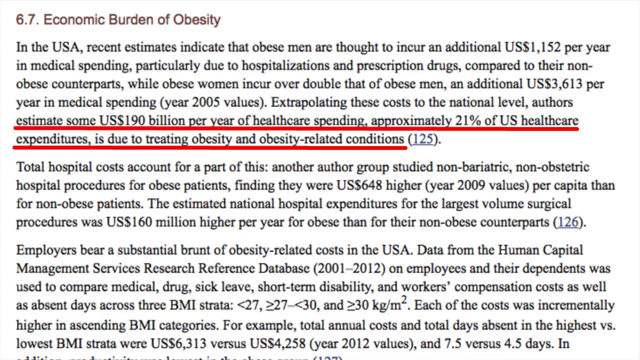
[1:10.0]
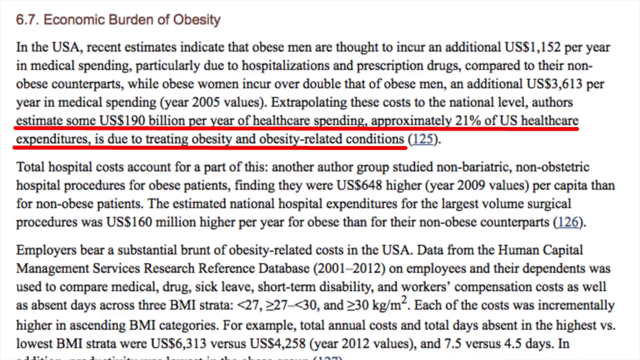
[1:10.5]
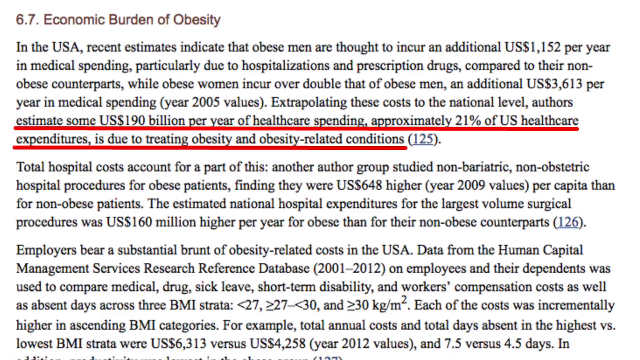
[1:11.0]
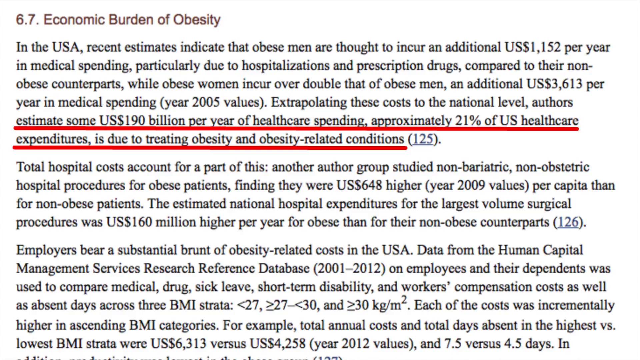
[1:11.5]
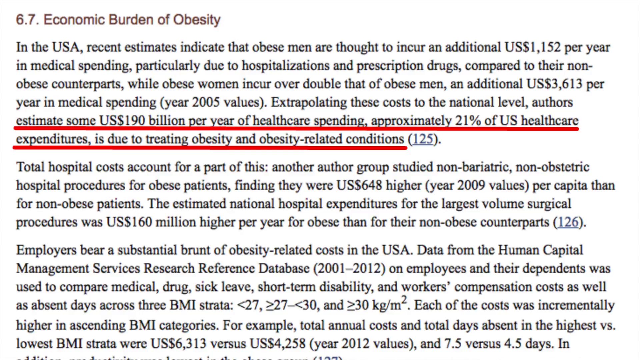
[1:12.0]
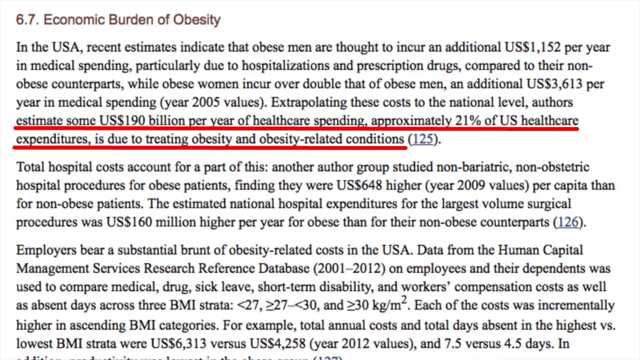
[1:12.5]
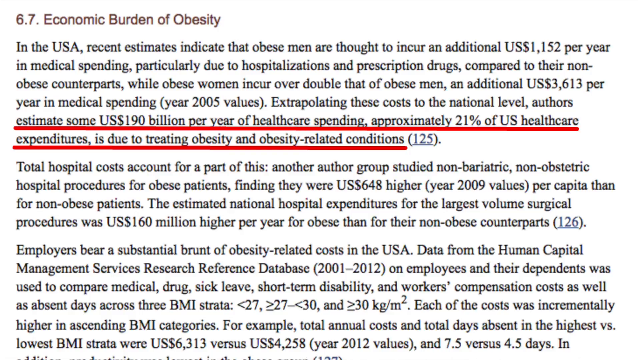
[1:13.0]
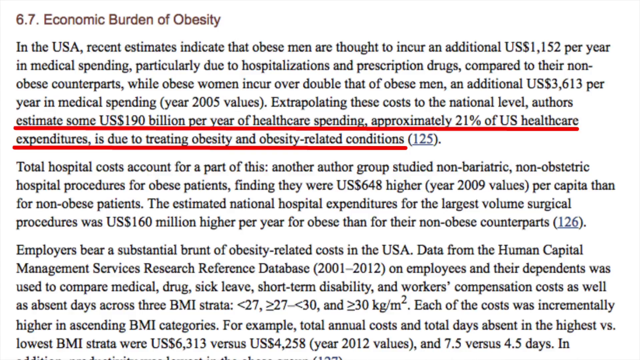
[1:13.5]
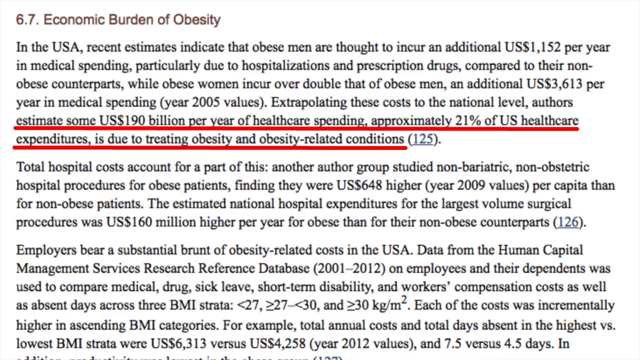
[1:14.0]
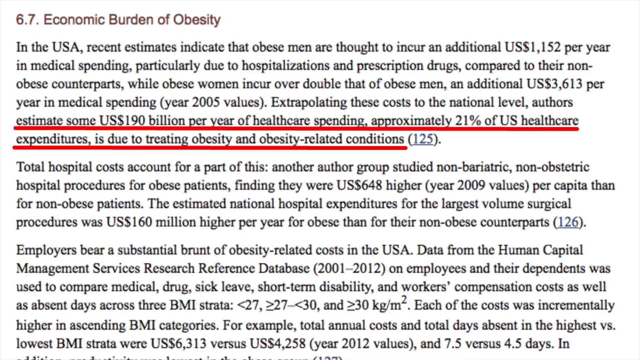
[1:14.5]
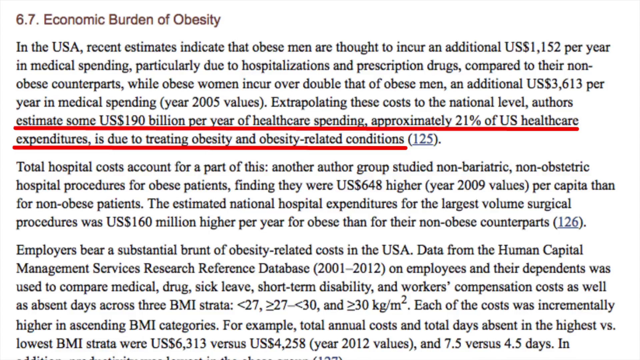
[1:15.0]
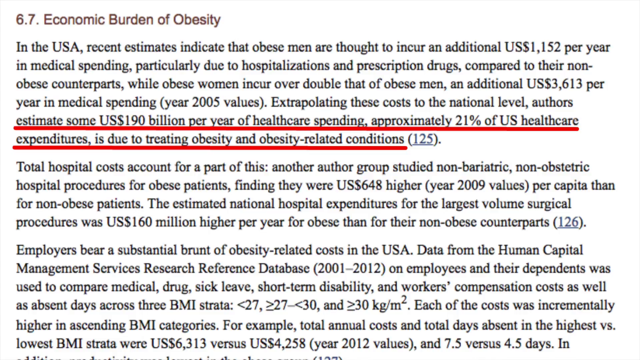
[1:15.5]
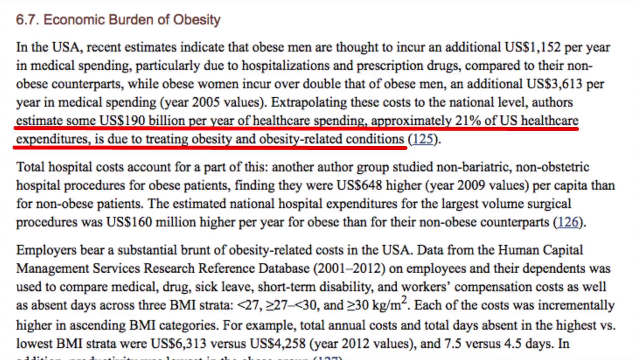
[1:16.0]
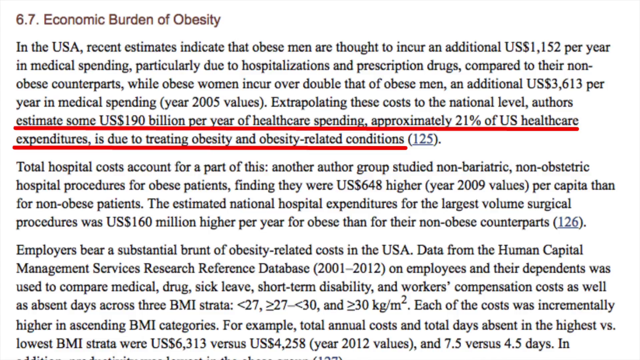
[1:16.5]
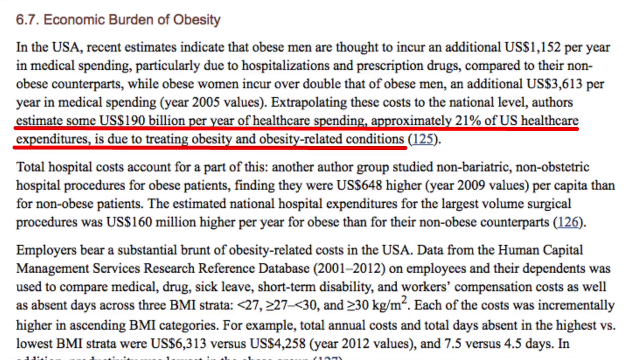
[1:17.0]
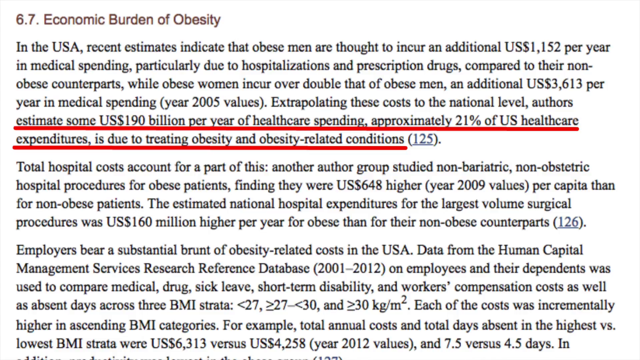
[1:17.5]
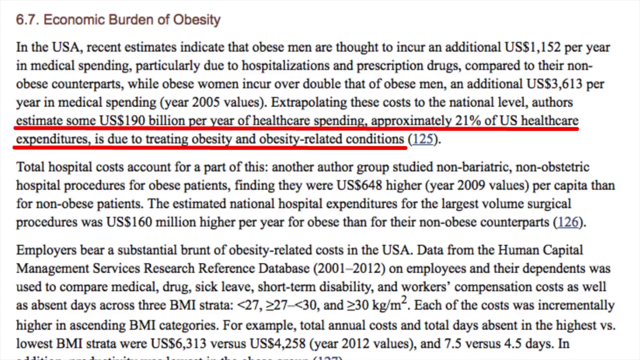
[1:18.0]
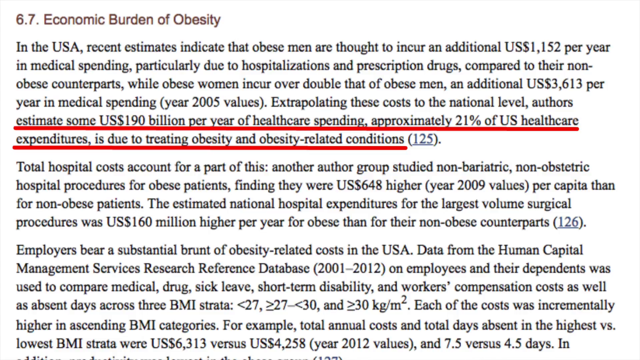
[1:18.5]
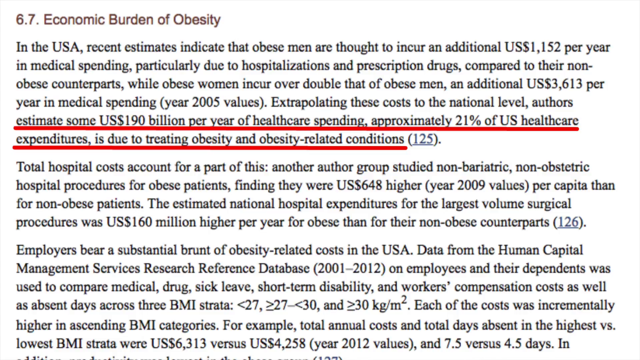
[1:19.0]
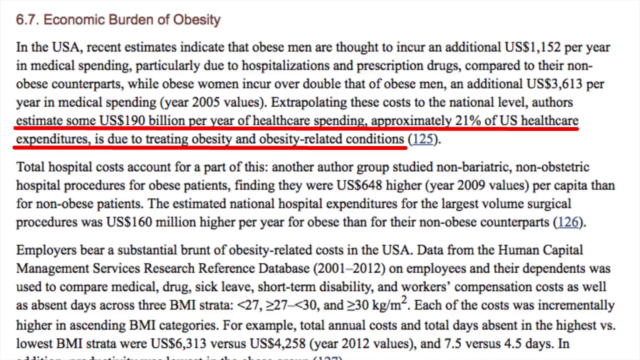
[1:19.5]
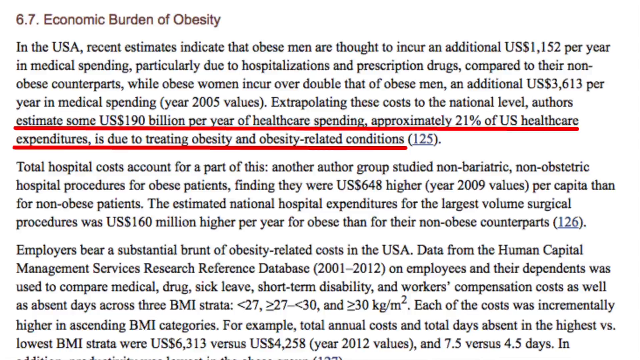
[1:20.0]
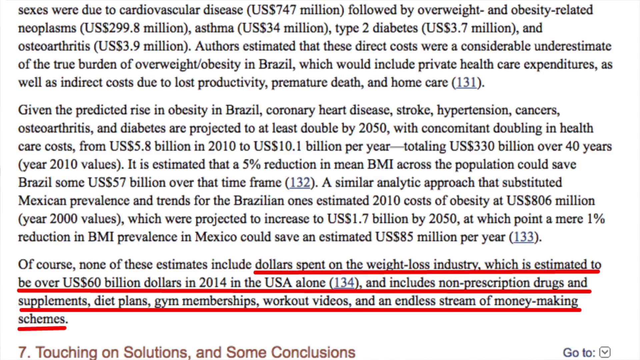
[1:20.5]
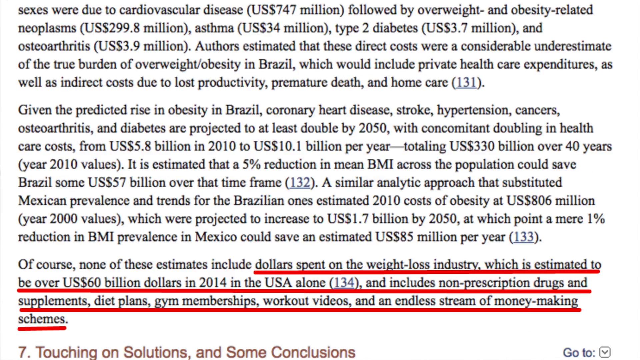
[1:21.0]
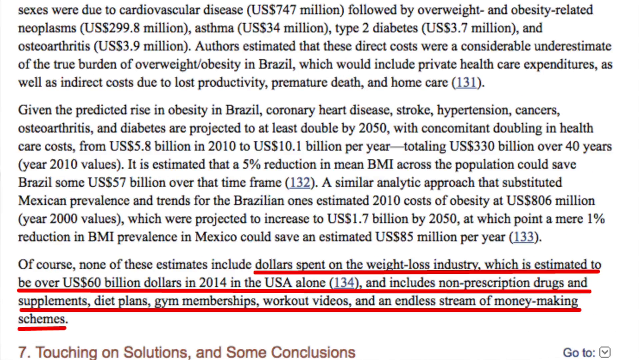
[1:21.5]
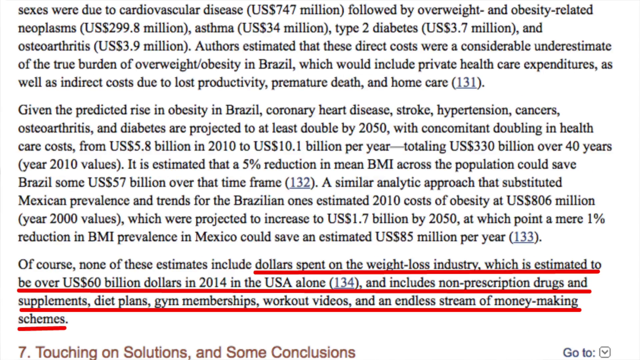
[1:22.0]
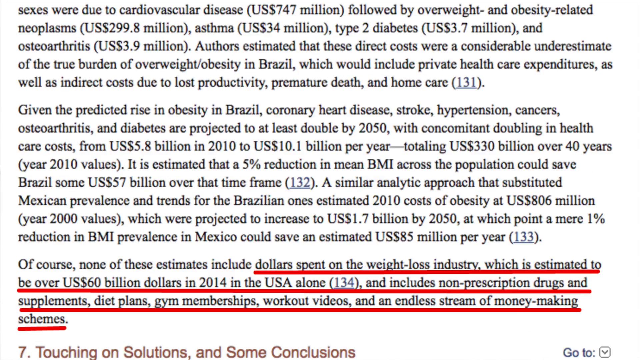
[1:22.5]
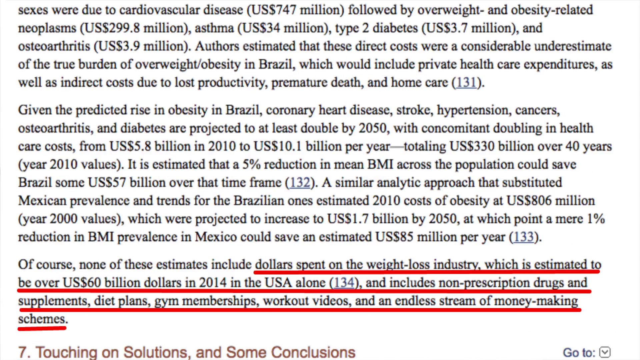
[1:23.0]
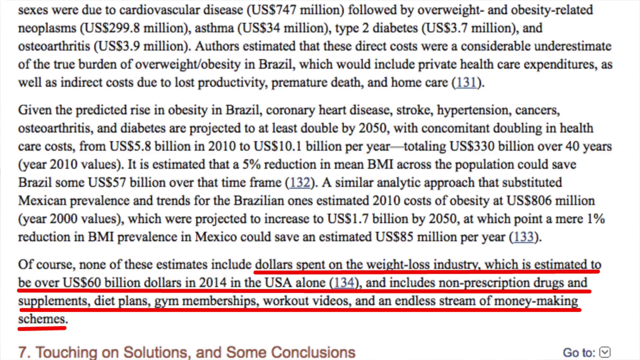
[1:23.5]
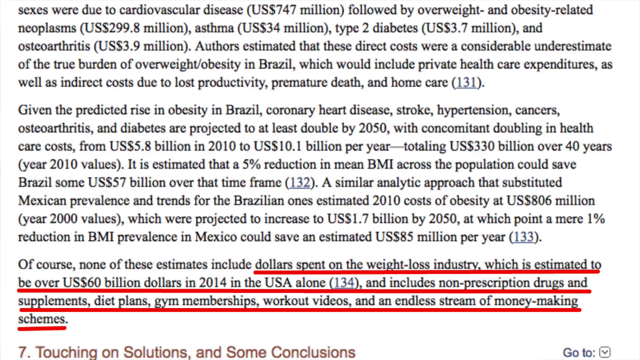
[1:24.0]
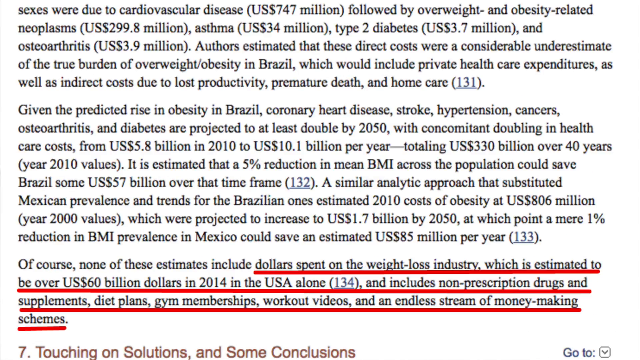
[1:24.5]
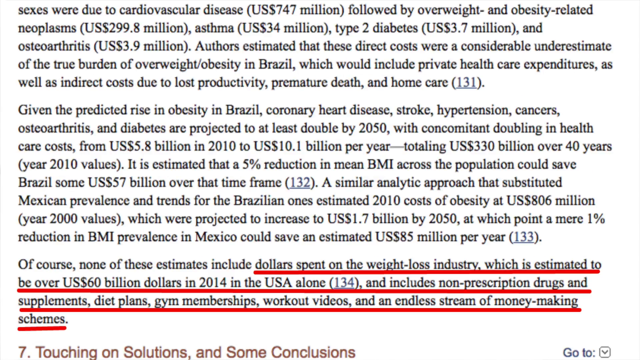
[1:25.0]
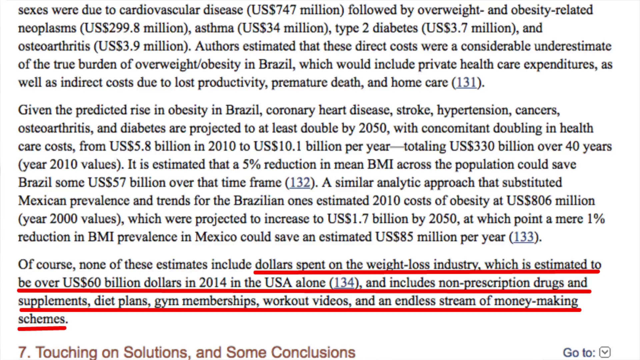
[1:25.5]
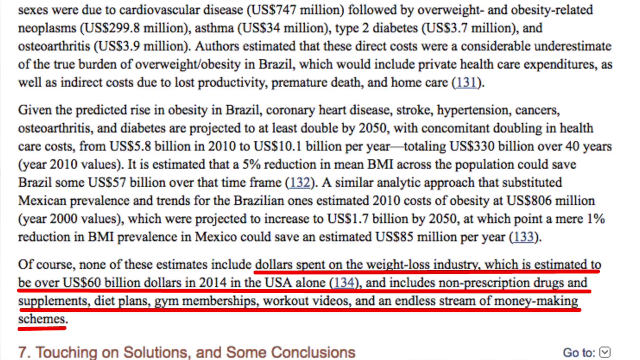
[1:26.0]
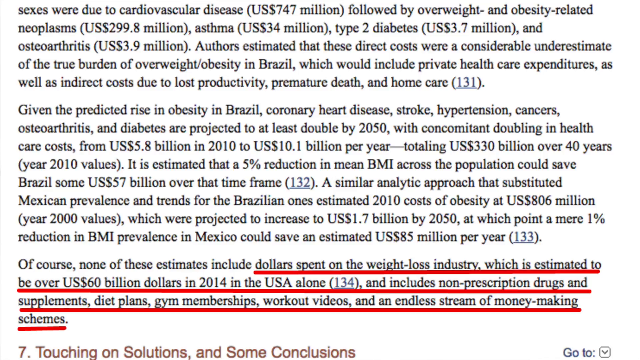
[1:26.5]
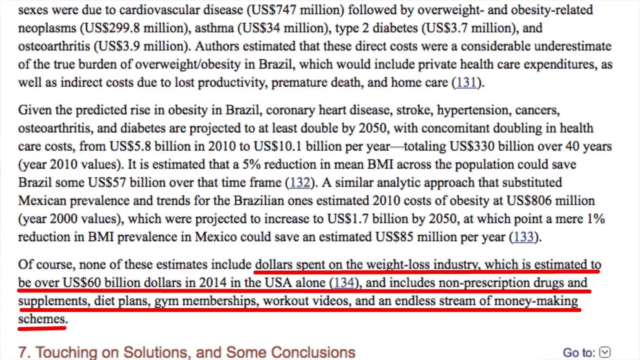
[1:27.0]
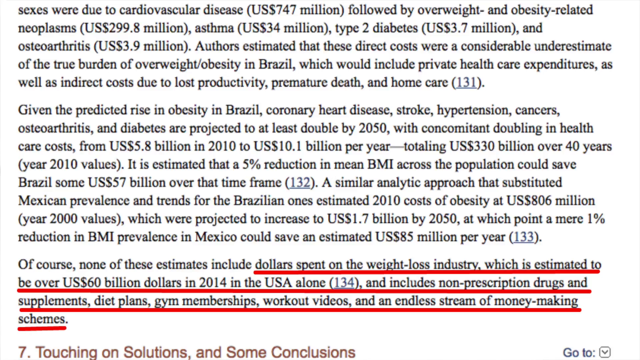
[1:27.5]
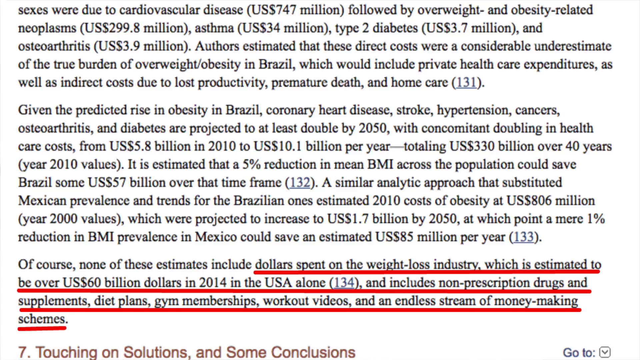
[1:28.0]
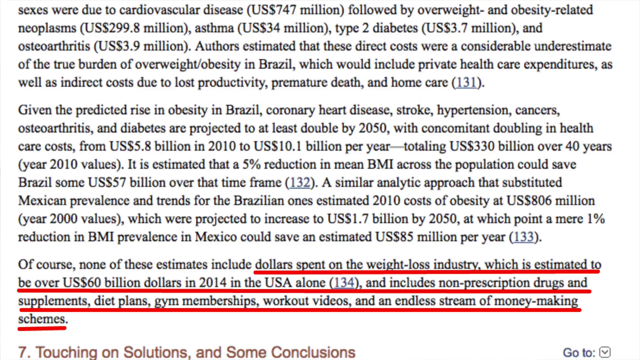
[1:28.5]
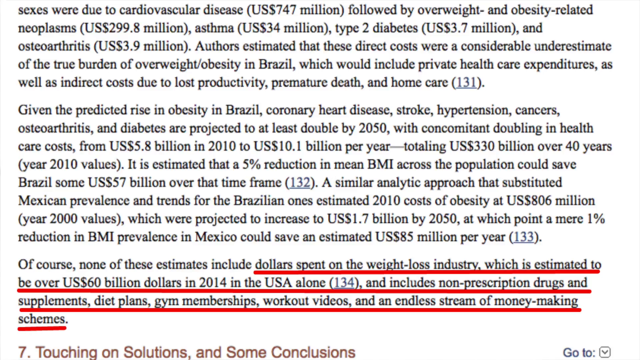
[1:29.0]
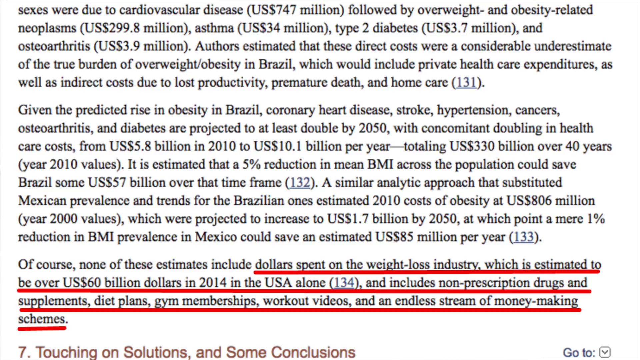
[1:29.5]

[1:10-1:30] The video covers the economic burden of obesity in the USA: obese men and obese women incur additional medical spending compared with their non-obese counterparts, particularly due to hospitalizations and prescription drugs, with obese women incurring over double that of men. Extrapolated to the national level, some US$190 billion per year, approximately 21% of US health care expenditure, is attributed to treating obesity and obesity-related conditions. Hospital costs are also presented as higher for obese patients than for non-obese patients.